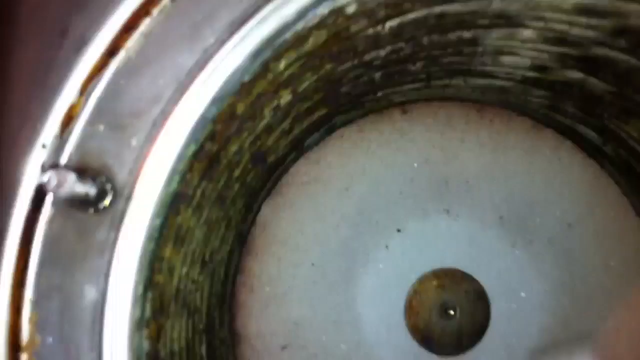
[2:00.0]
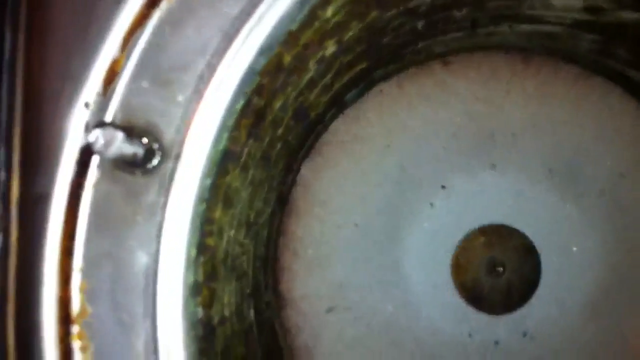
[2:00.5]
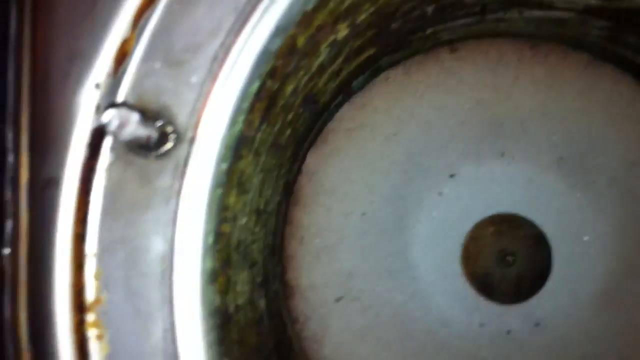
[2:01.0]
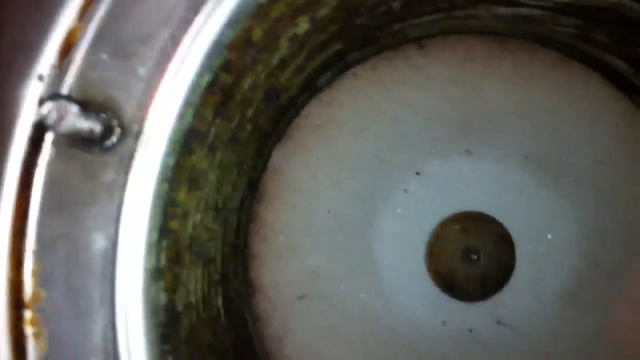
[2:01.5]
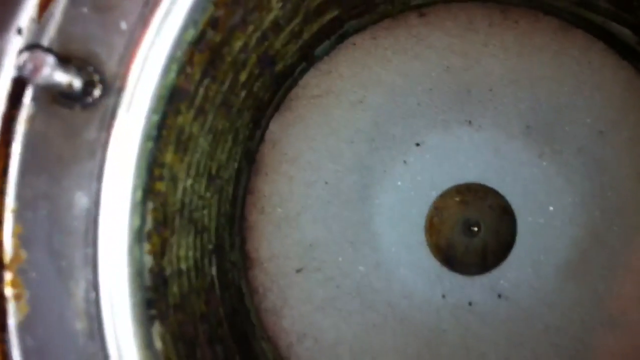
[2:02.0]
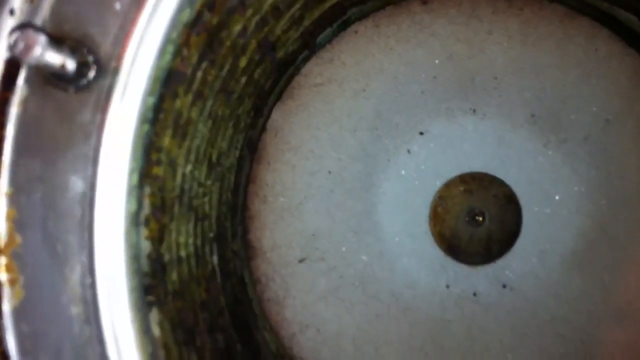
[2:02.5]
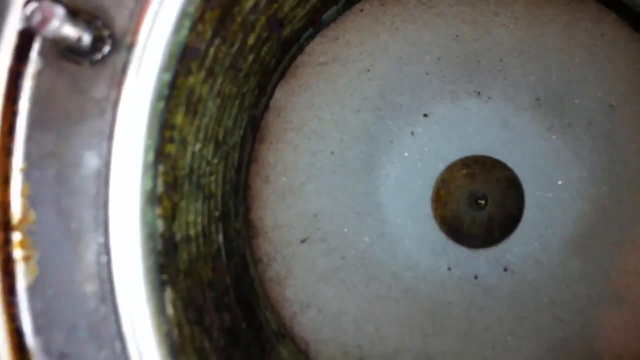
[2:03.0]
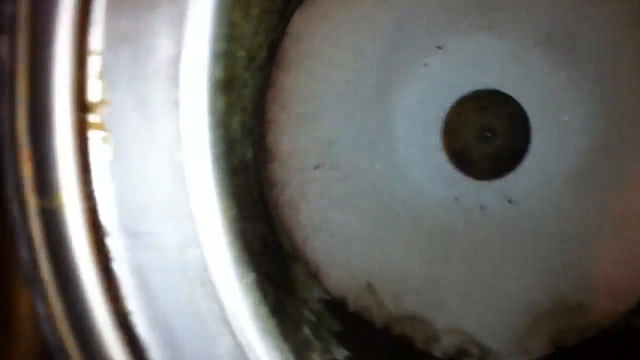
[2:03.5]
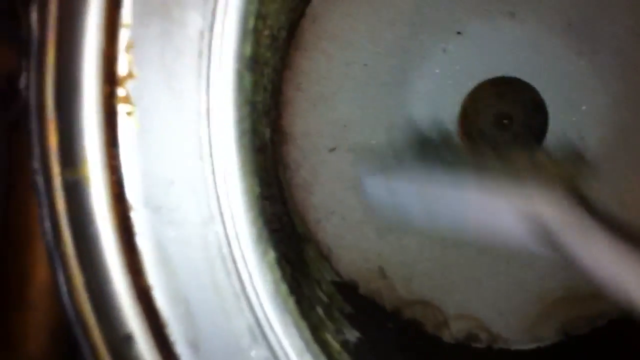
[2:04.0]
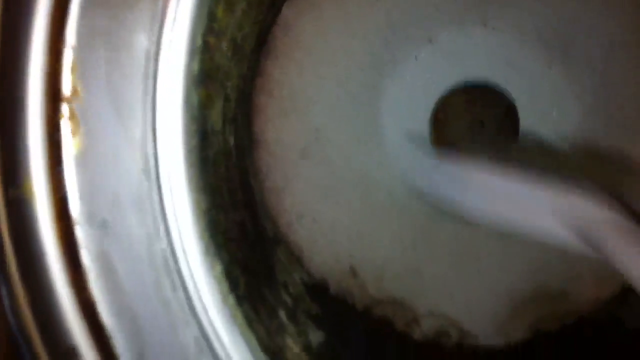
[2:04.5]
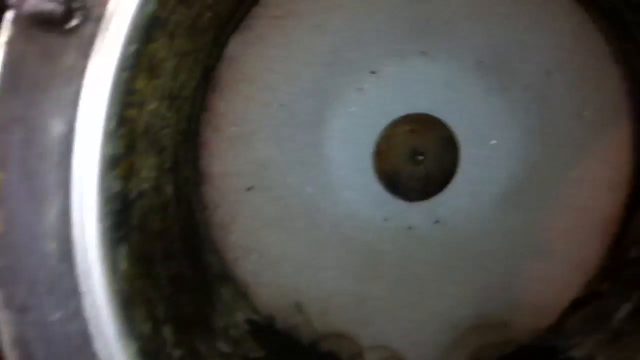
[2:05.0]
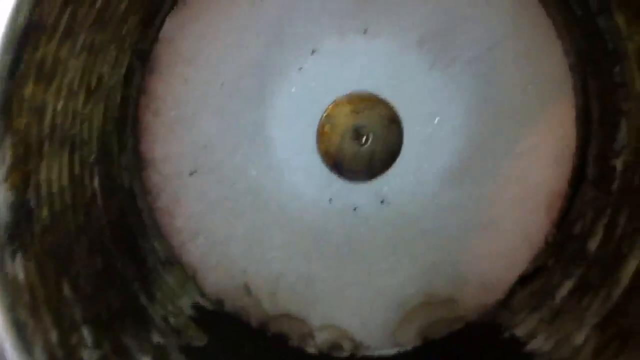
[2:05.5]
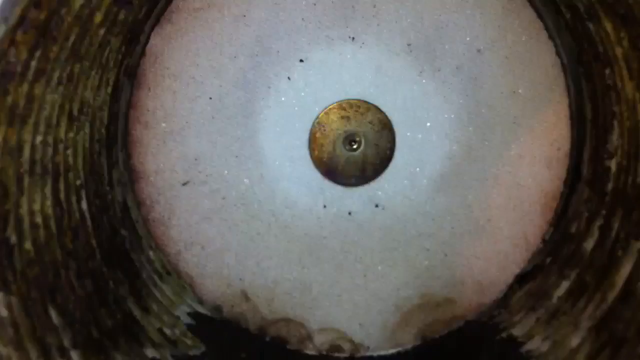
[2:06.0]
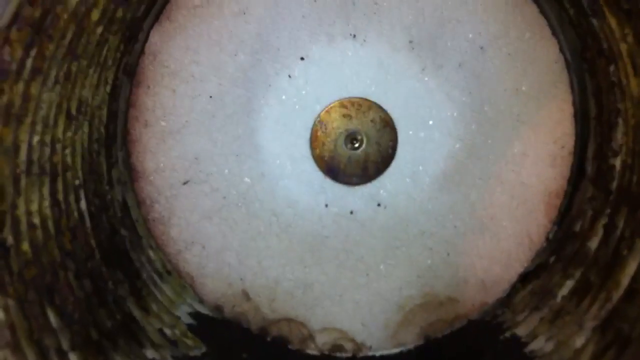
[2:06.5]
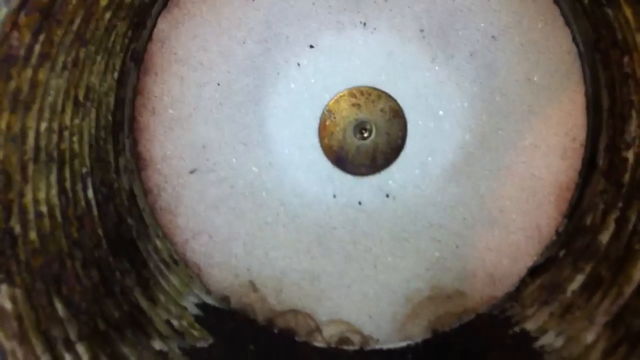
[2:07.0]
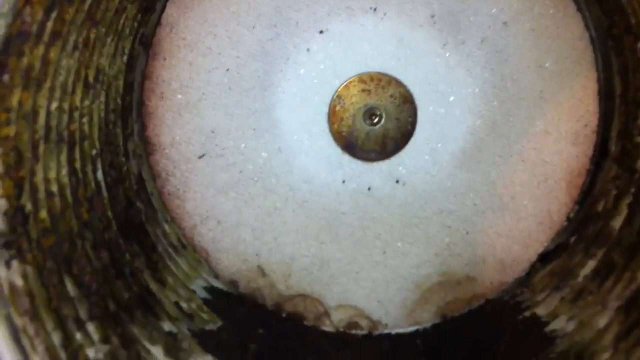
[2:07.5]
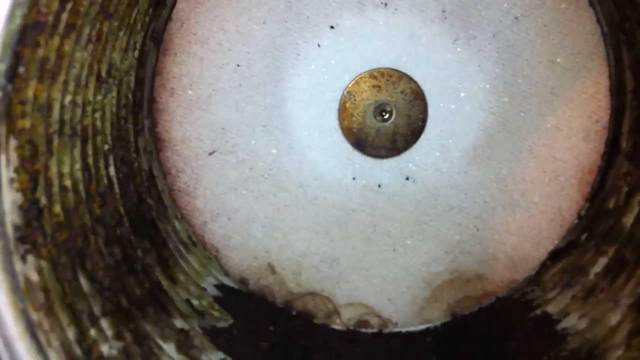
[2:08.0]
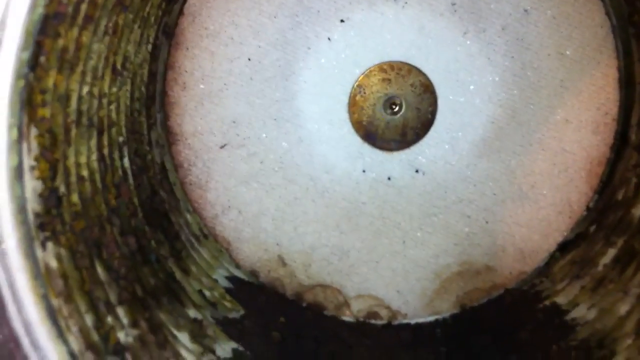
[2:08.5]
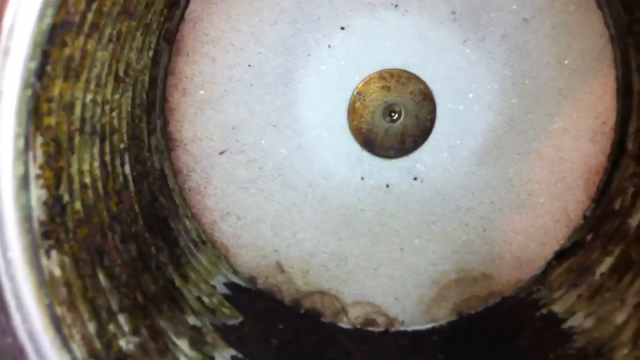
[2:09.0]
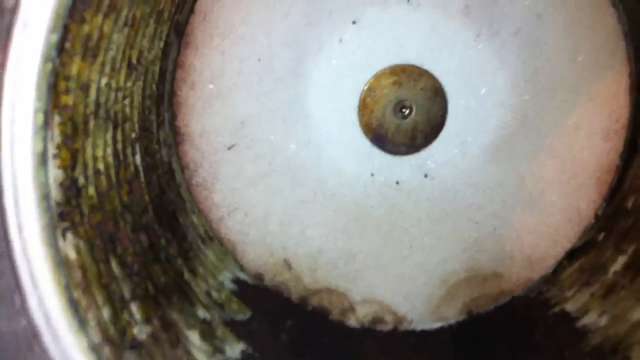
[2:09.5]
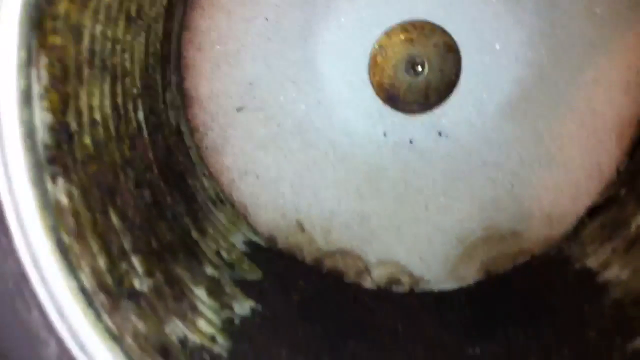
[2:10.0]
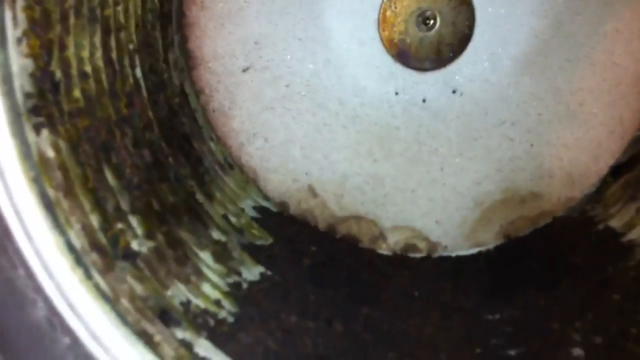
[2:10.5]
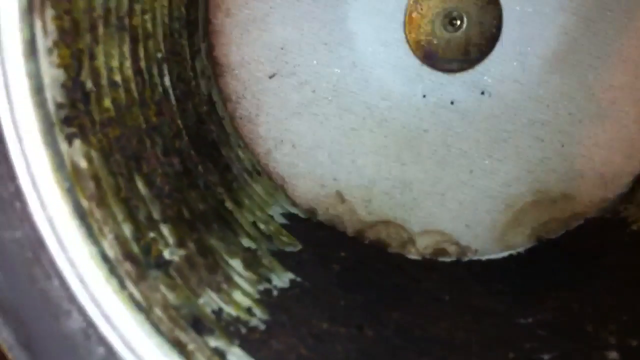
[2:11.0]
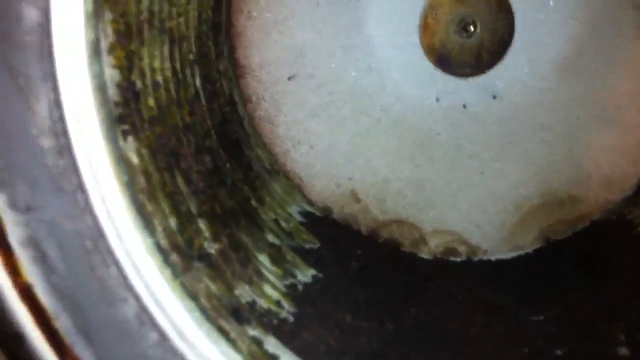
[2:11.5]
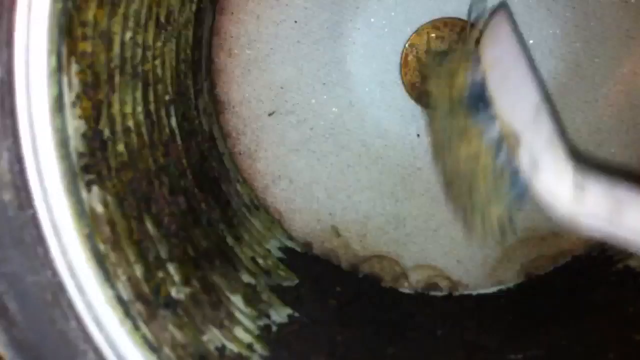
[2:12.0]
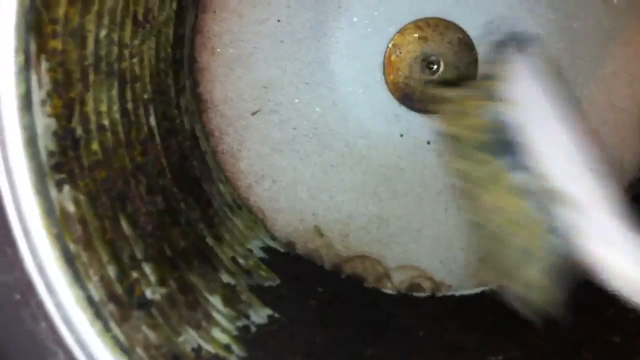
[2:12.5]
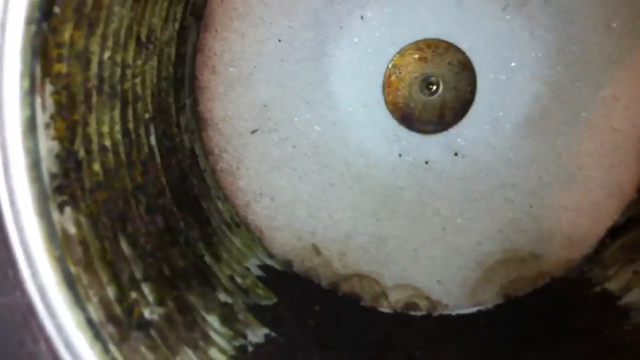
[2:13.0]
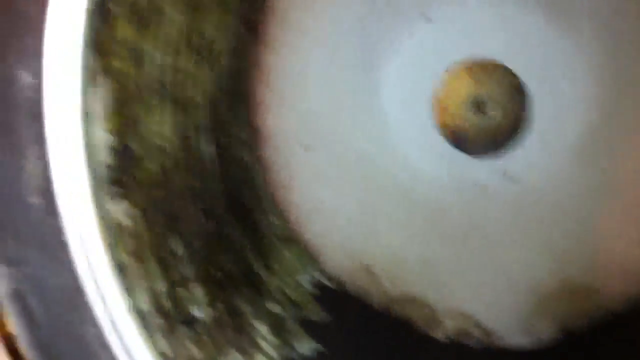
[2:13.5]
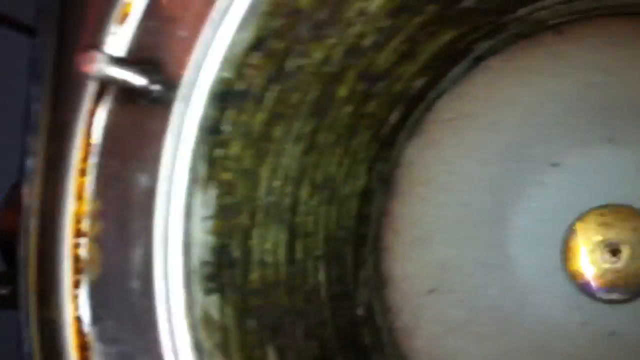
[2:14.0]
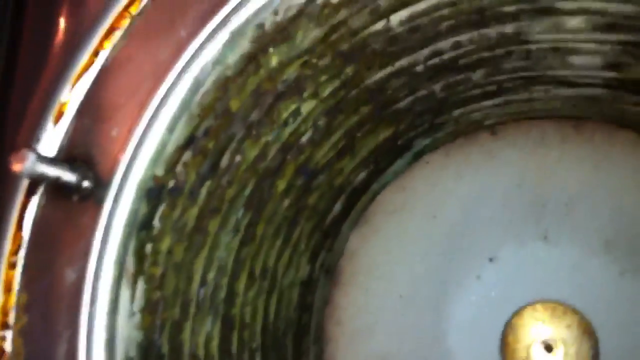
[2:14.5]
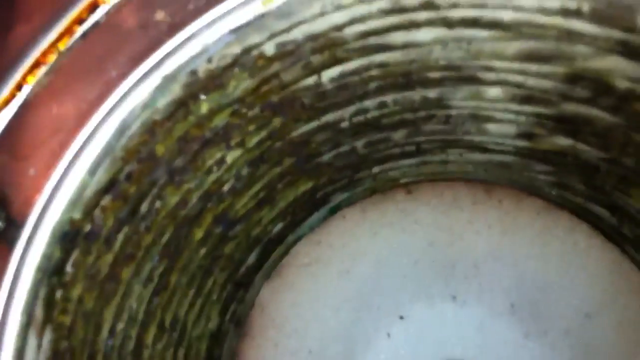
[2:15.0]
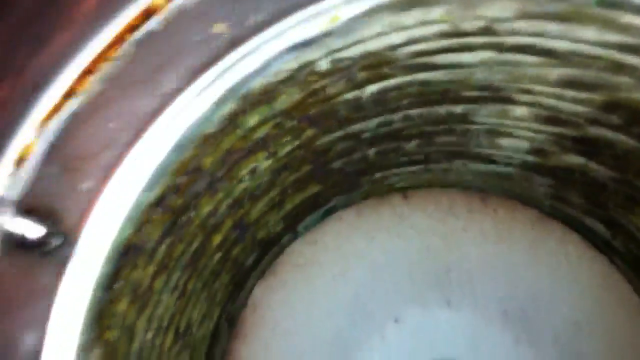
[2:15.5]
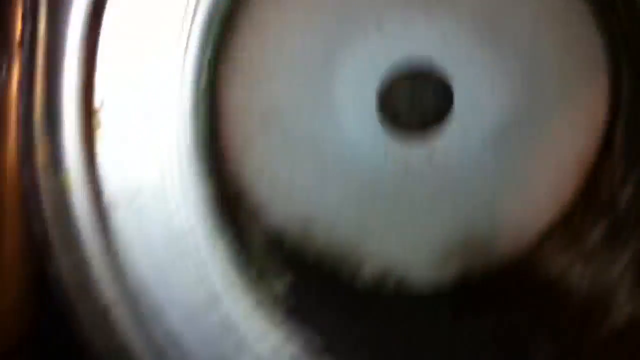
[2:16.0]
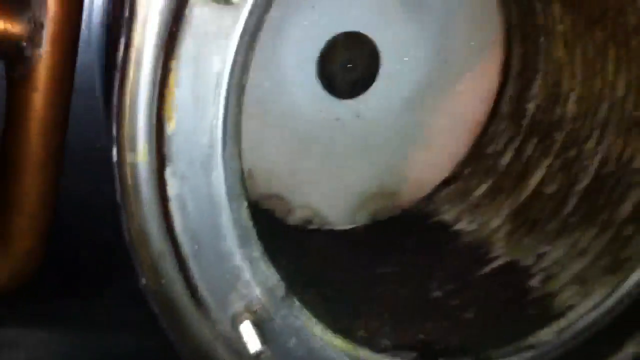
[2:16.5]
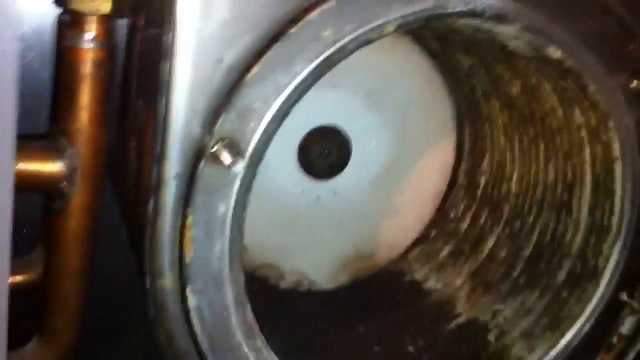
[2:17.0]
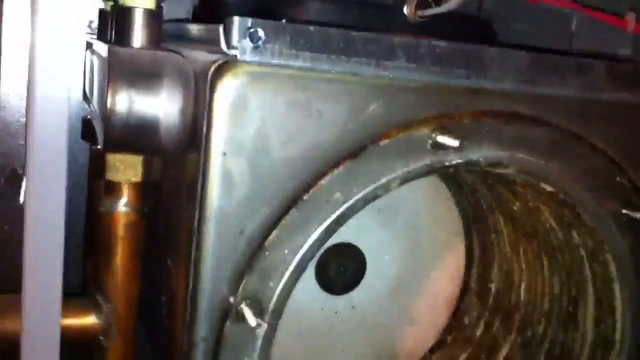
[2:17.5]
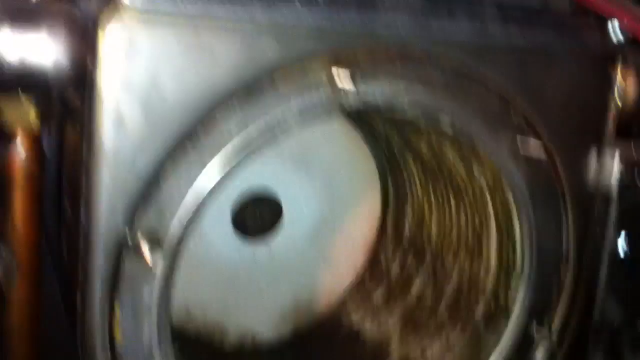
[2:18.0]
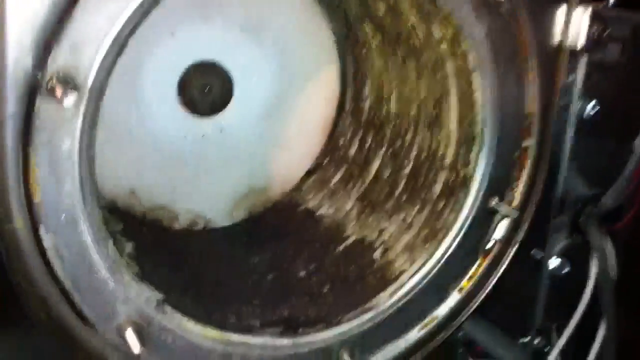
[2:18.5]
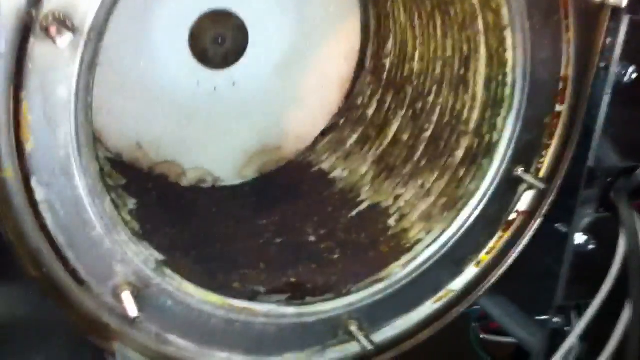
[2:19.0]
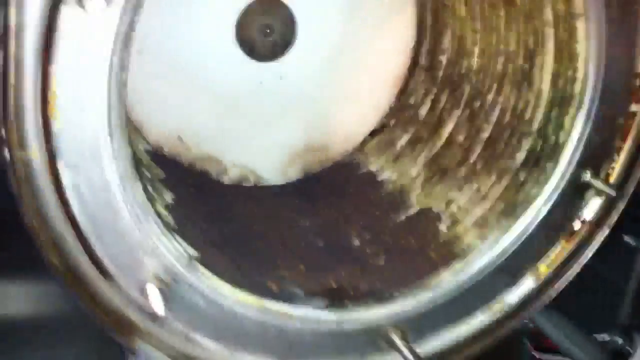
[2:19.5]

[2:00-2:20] He continues using the brush on what looks like mold or algae, without much effort. He goes over certain spots briefly with the brush, but nothing really comes off and there is no visible change; it is still really dirty.